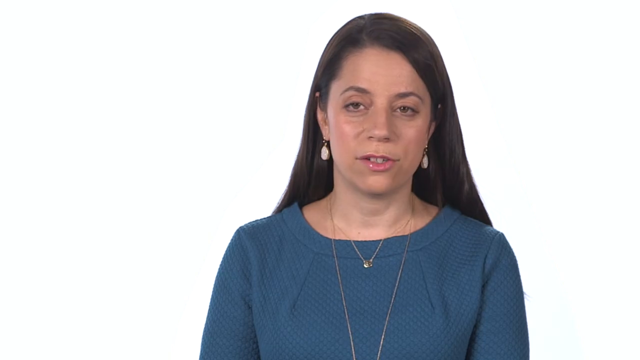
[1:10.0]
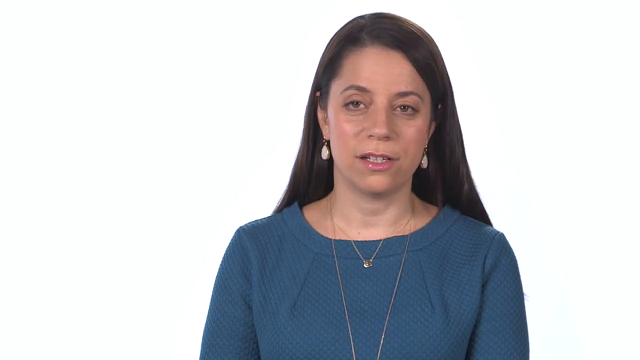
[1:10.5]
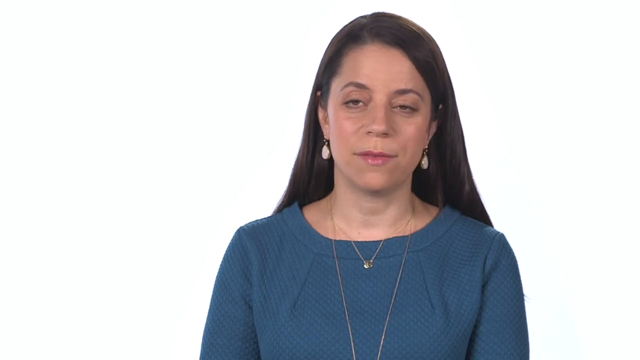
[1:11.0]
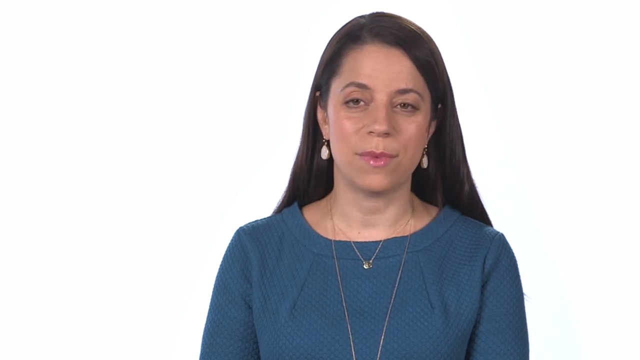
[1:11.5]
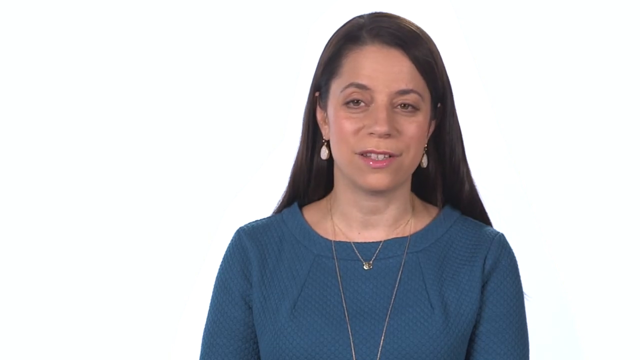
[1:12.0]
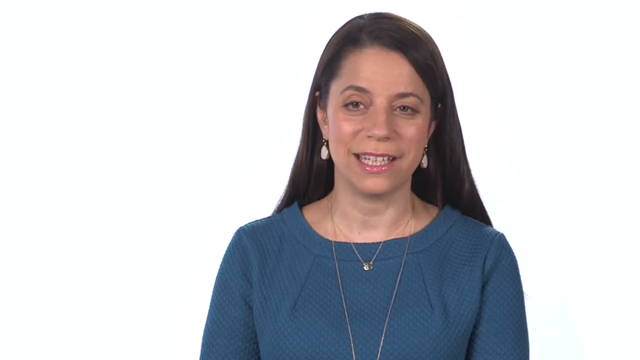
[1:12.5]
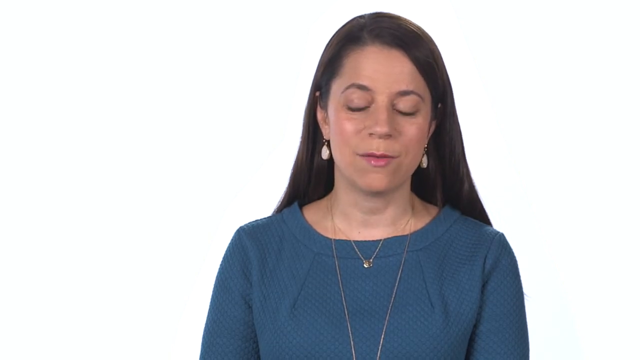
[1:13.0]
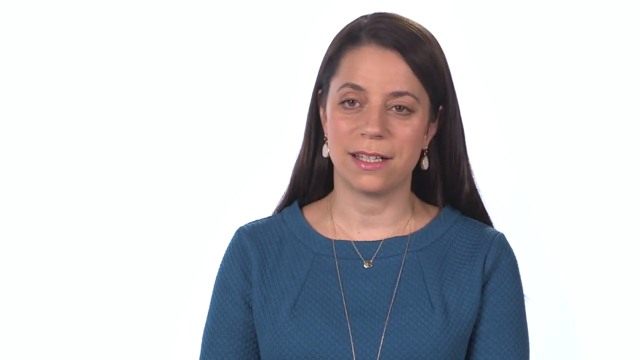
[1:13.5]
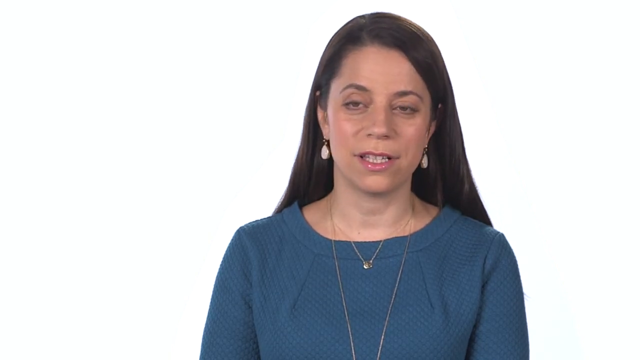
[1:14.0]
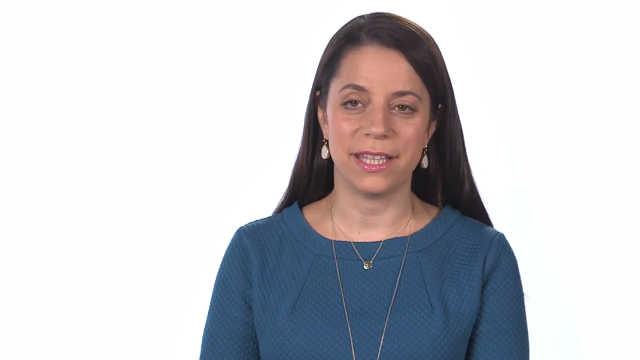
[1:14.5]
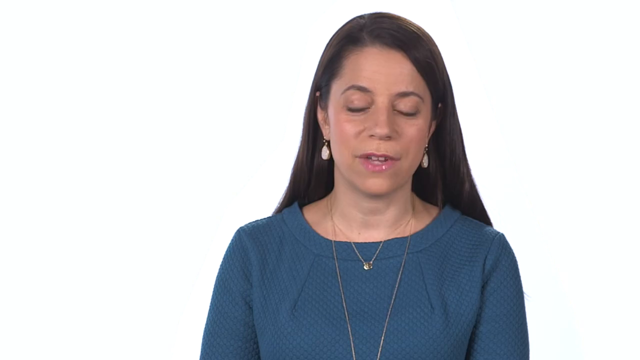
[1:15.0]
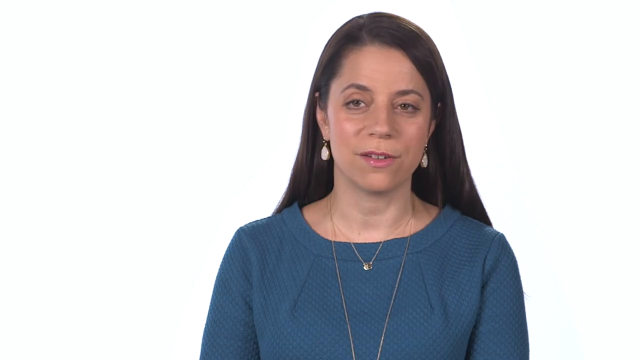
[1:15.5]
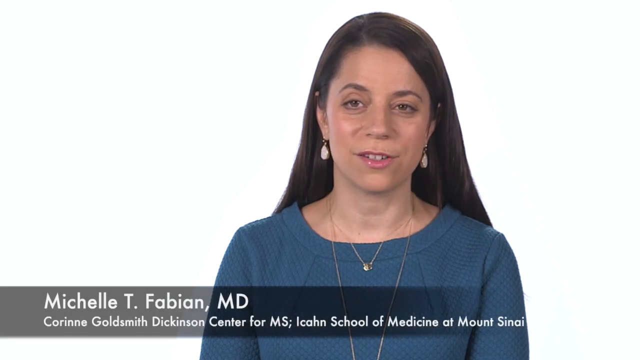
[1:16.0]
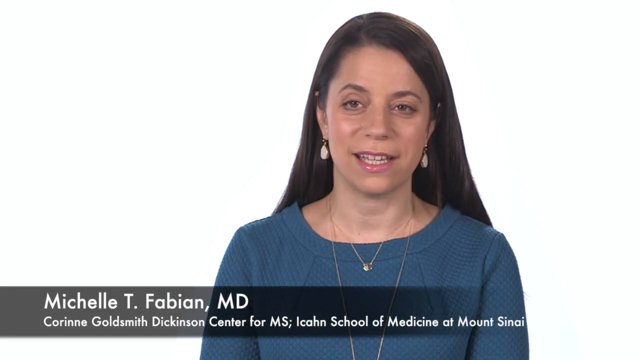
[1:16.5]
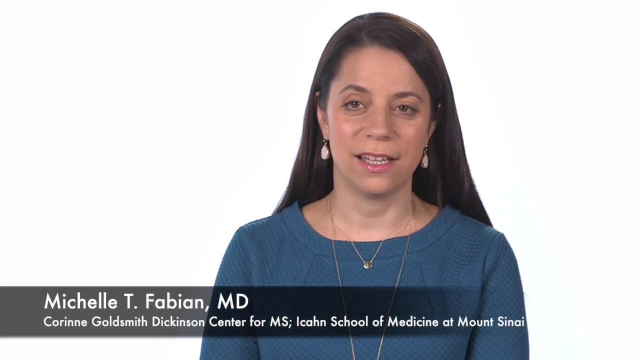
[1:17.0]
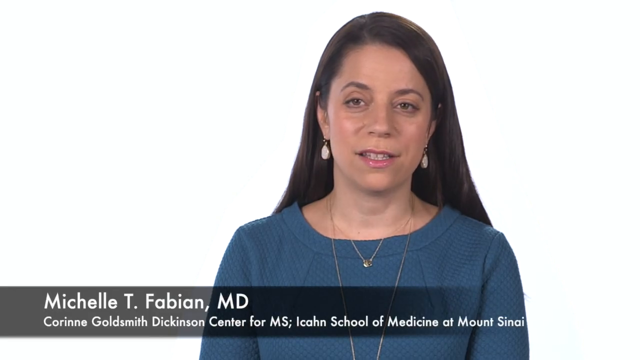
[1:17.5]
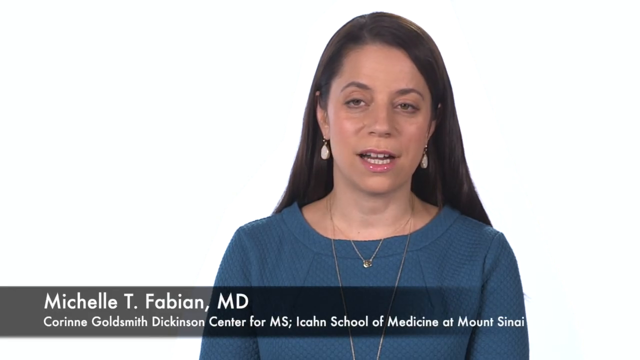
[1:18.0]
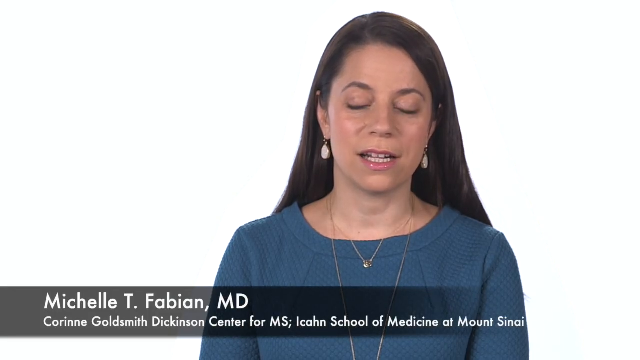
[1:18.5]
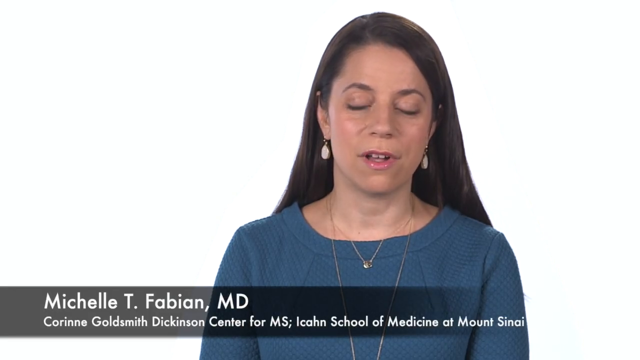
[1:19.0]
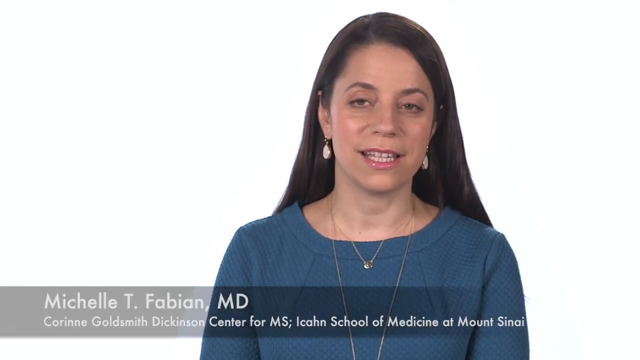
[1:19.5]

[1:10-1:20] The young woman, Michelle Fabian, MD, appears against a plain white background. She speaks to the camera, though her eyes look a little off to the left. She wears a teal blue top with a scoop neck, white drop earrings and two necklaces around her neck. She has dark brown skin, dark eyebrows and dark hair parted on the right. A caption beneath her gives her name and position: "Michelle T. Fabian, MD", "Corinne Goldsmith Dickinson Center for MS", "Icahn School of Medicine at Mount Sinai".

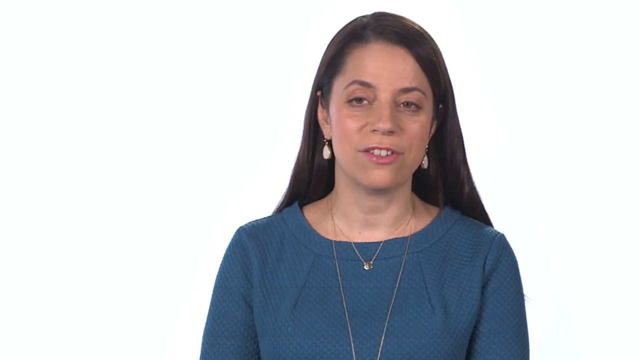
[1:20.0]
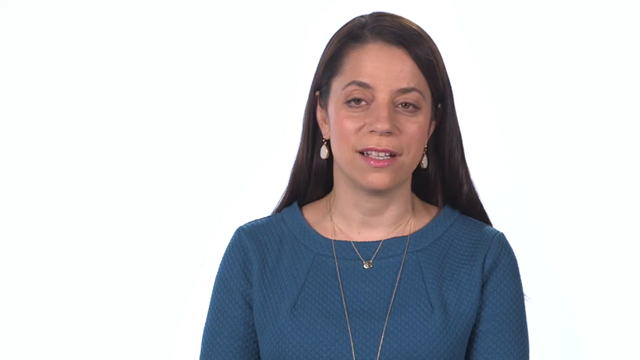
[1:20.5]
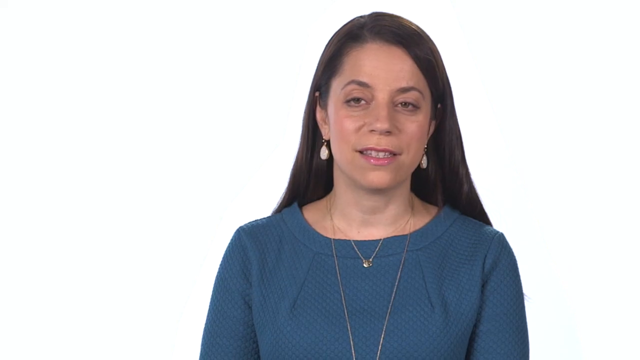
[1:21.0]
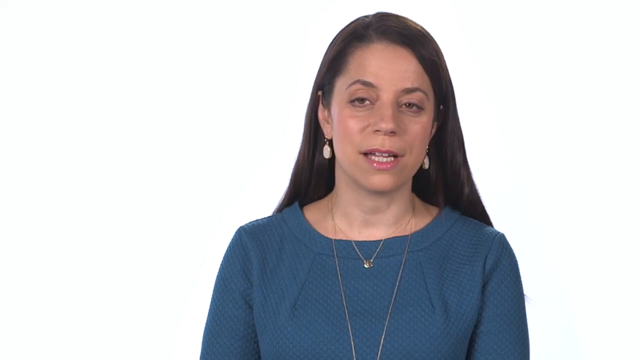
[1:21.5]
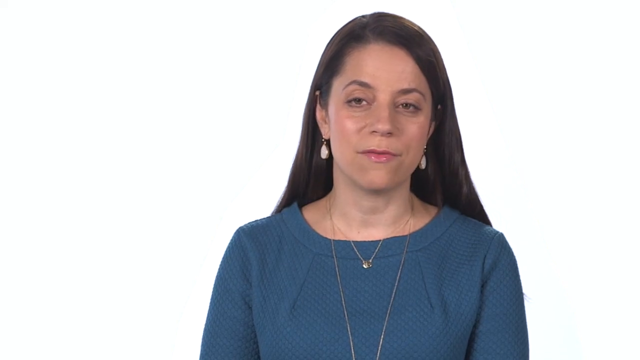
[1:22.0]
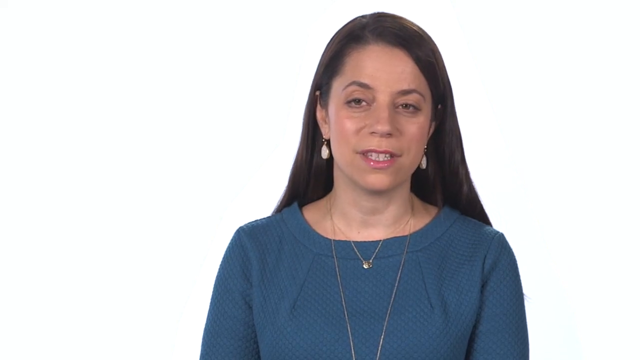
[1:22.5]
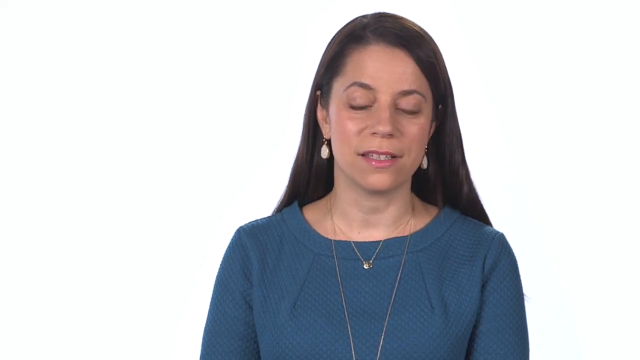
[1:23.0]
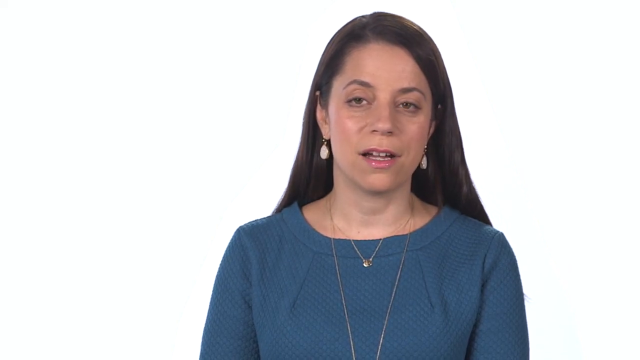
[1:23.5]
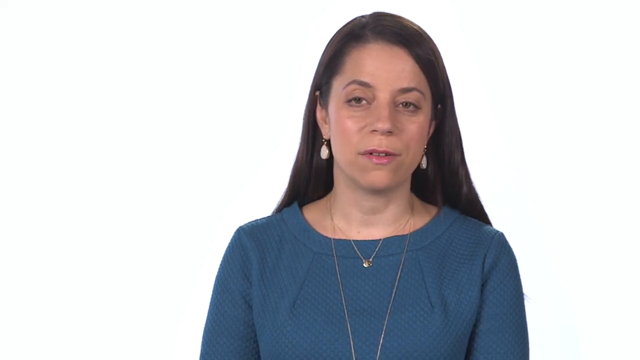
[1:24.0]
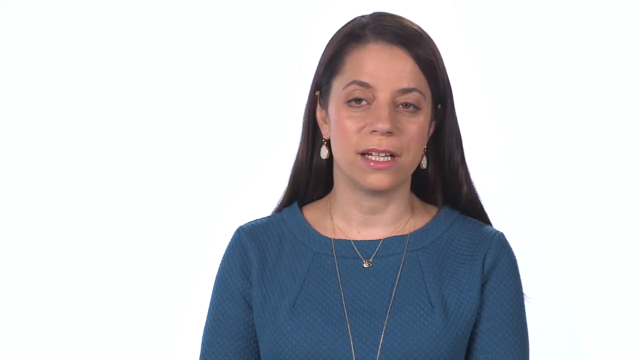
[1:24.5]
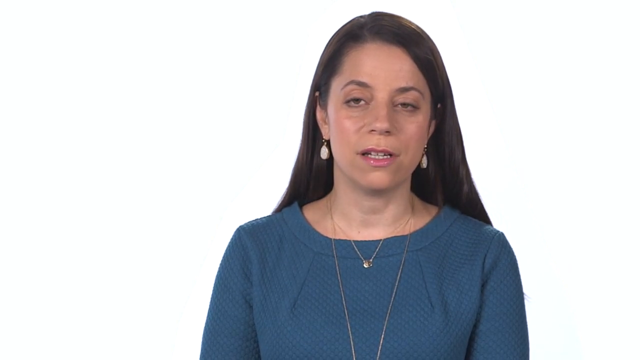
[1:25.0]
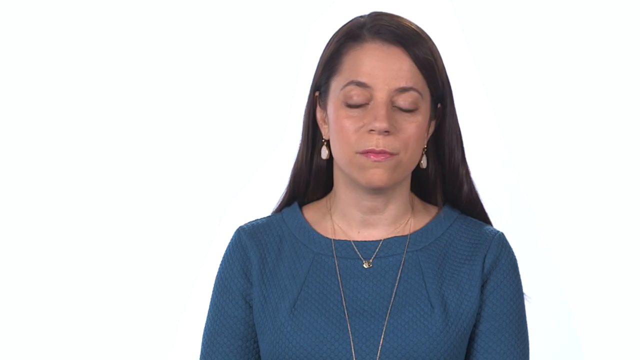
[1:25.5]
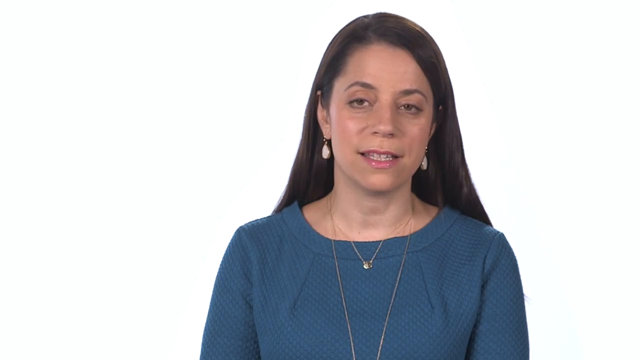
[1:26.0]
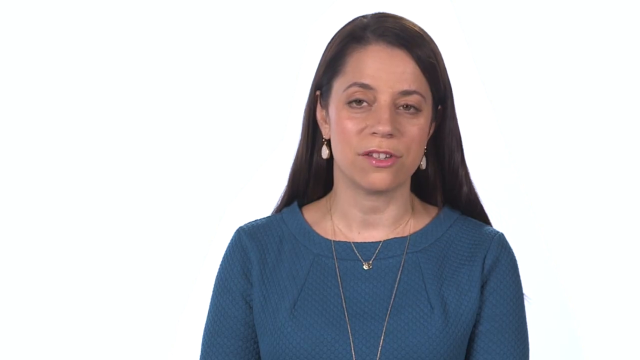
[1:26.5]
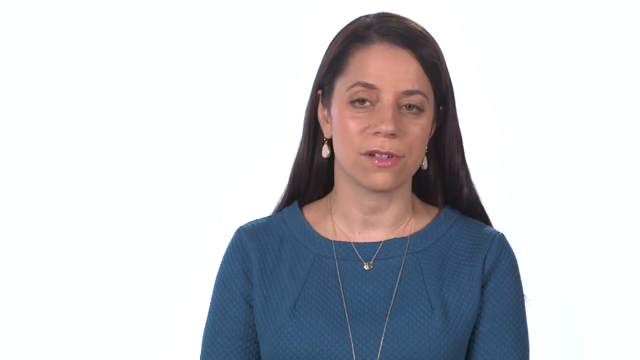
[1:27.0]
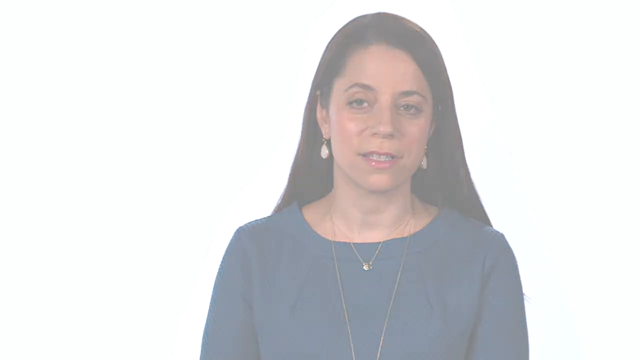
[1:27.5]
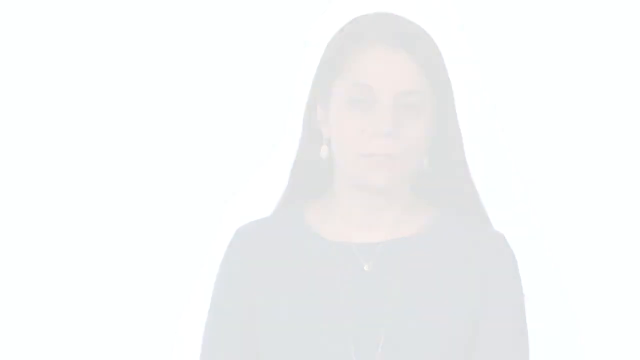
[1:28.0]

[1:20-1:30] Only the talking head of the interviewed woman is shown, positioned slightly to the right of the screen in front of a plain white background. She wears a scoop-neck teal top and two necklaces: one on a shorter chain with a visible locket, the other extending out of the frame. She has white earrings, pale pink lip gloss, and long dark hair parted slightly to the right that flows behind her shoulders. Early on, a caption shows her name: "Michelle T. Fabian, MD, the Corinne Goldsmith Dickinson Center for MS, Icahn School of Medicine at Mount Sinai". She speaks to the camera and seems relaxed, occasionally nodding her head, seemingly to emphasize what she is saying.